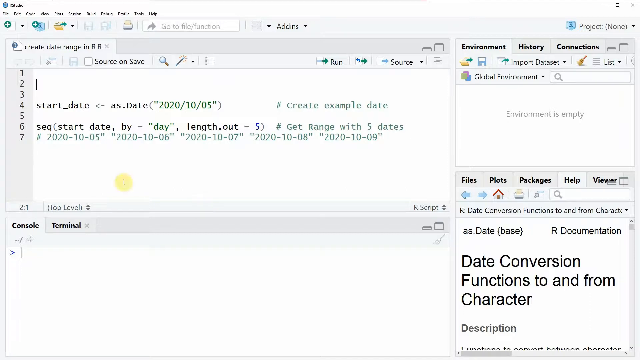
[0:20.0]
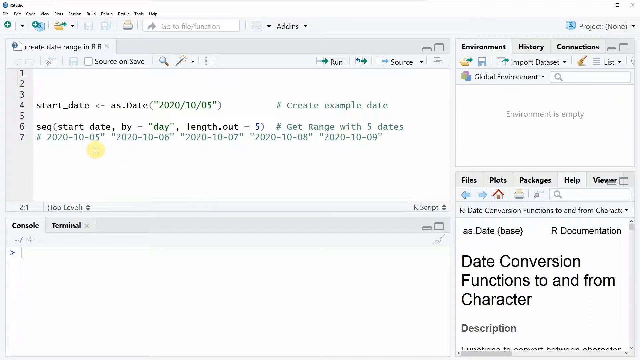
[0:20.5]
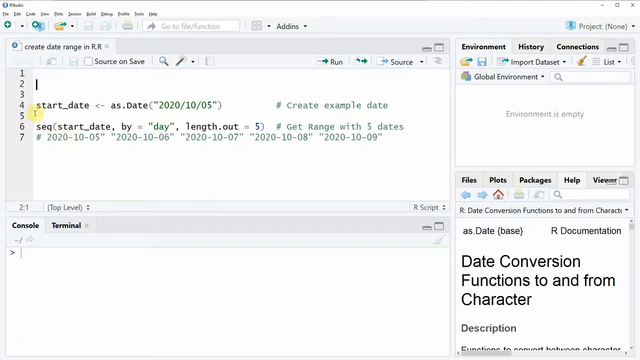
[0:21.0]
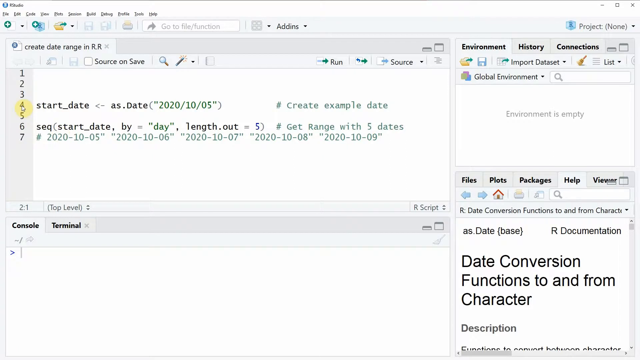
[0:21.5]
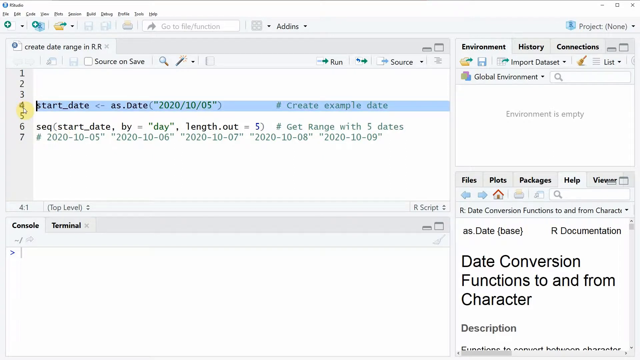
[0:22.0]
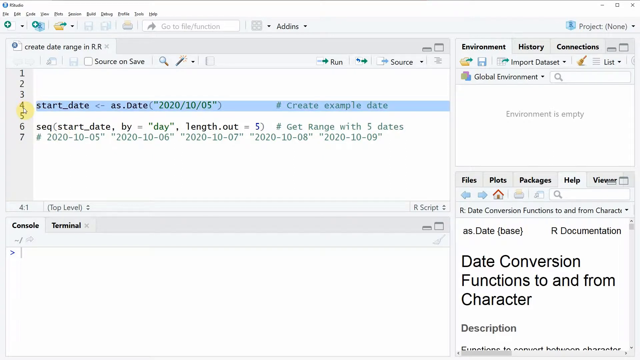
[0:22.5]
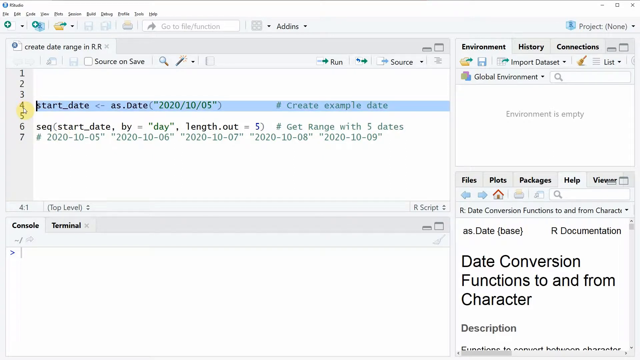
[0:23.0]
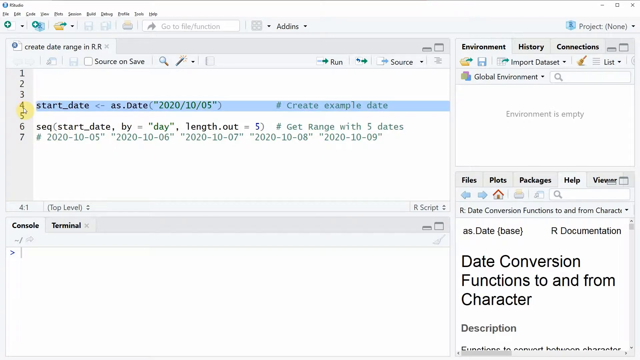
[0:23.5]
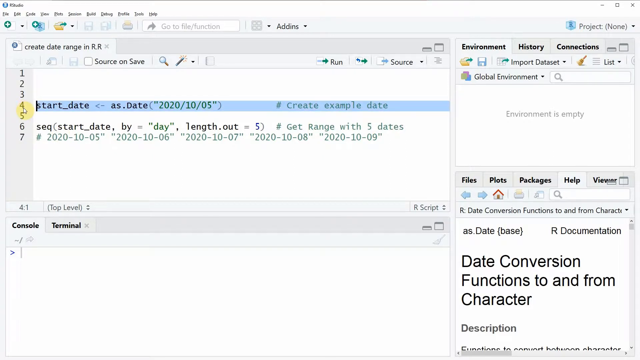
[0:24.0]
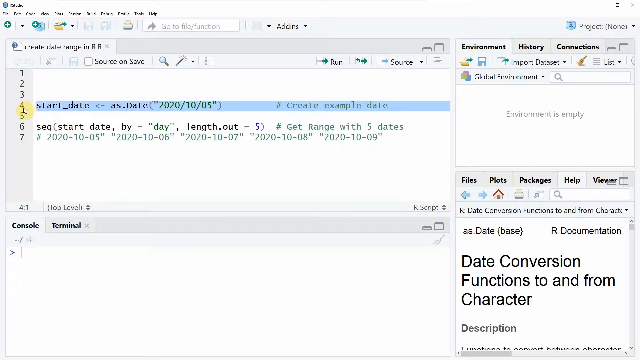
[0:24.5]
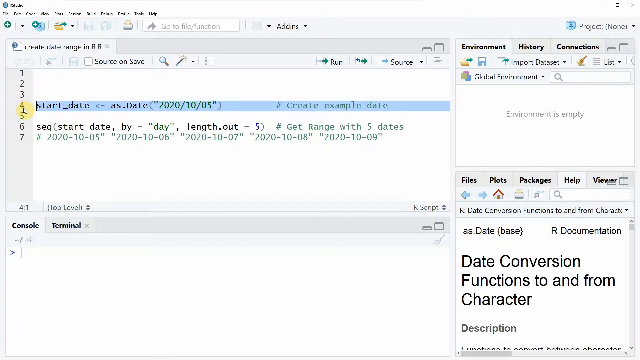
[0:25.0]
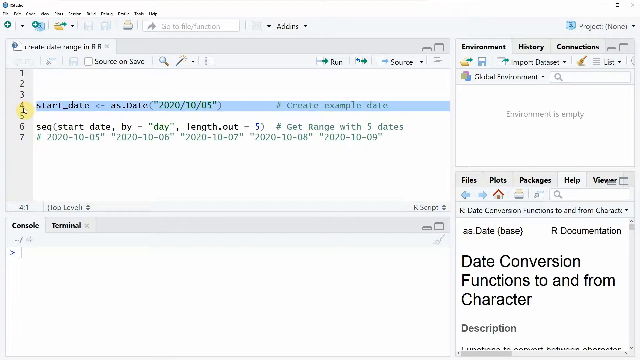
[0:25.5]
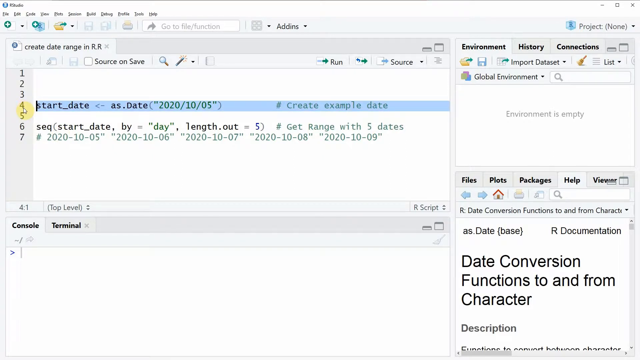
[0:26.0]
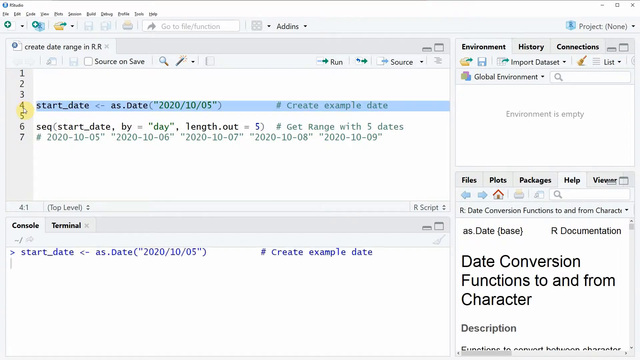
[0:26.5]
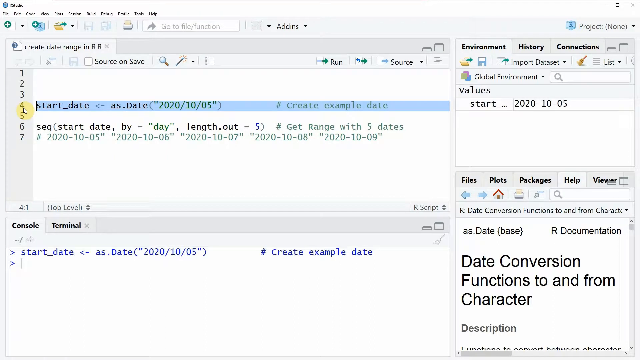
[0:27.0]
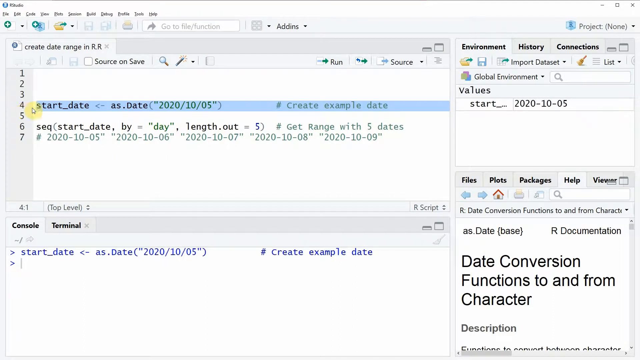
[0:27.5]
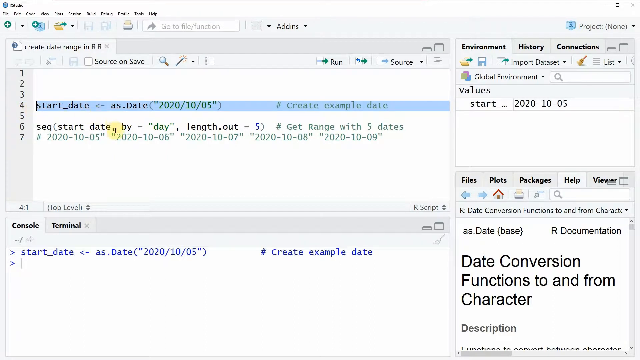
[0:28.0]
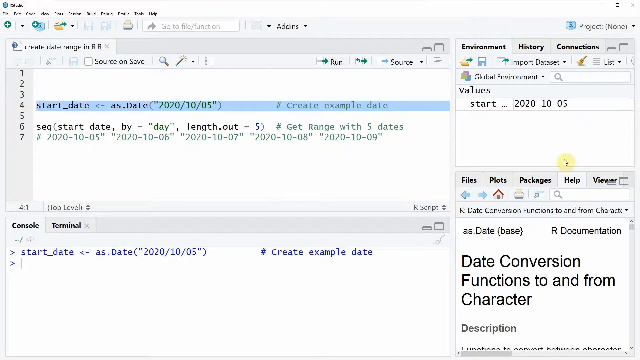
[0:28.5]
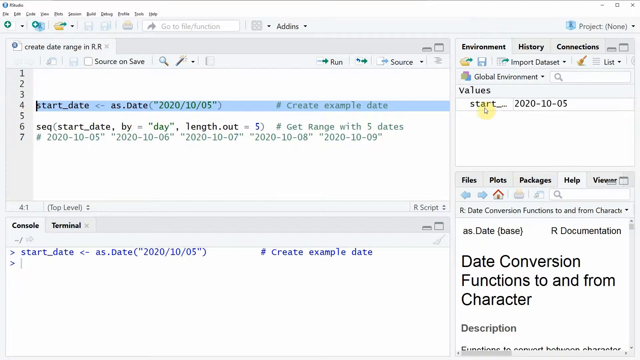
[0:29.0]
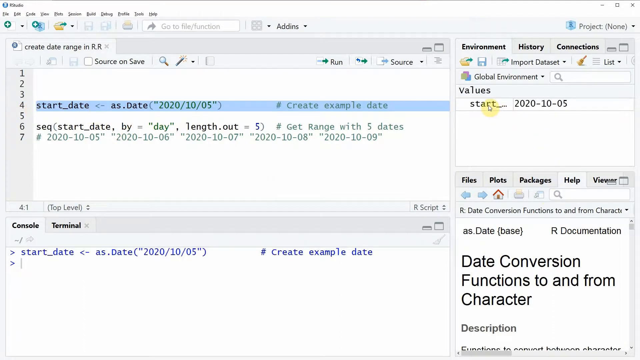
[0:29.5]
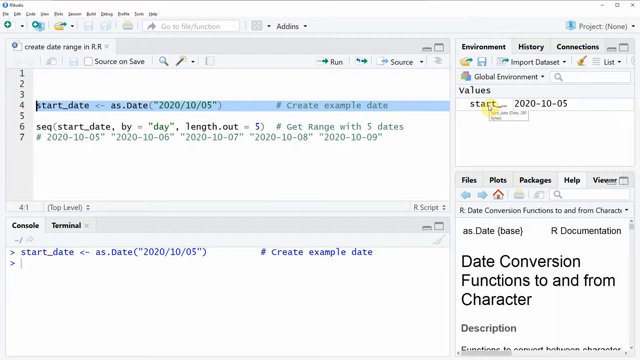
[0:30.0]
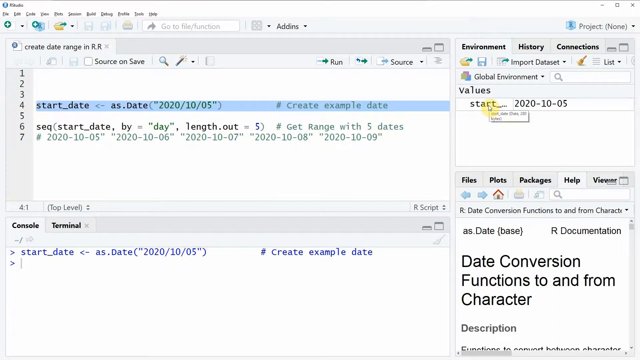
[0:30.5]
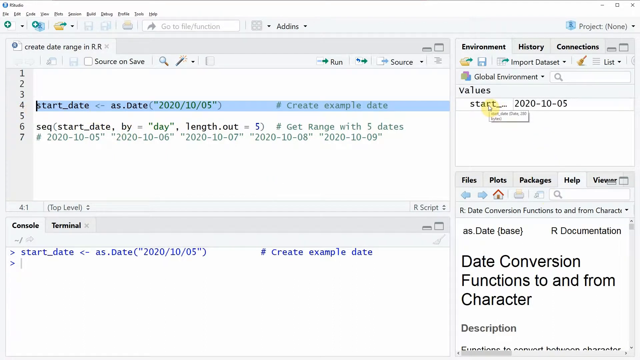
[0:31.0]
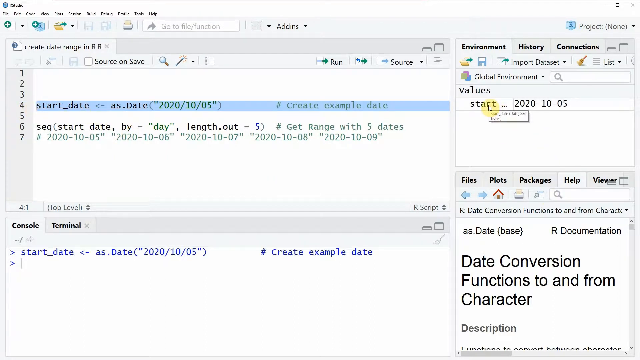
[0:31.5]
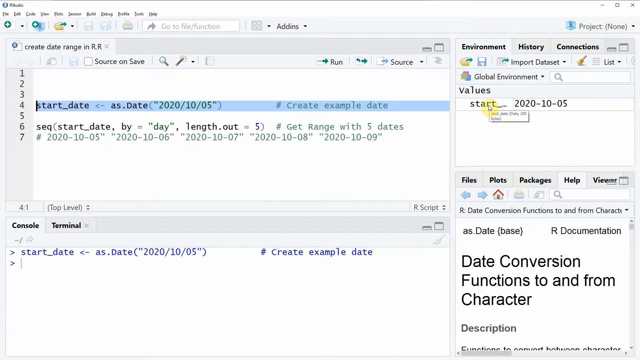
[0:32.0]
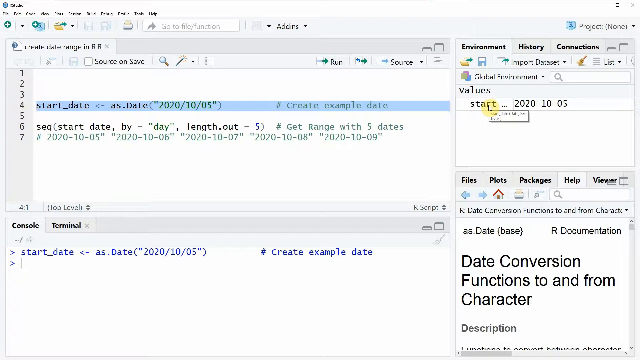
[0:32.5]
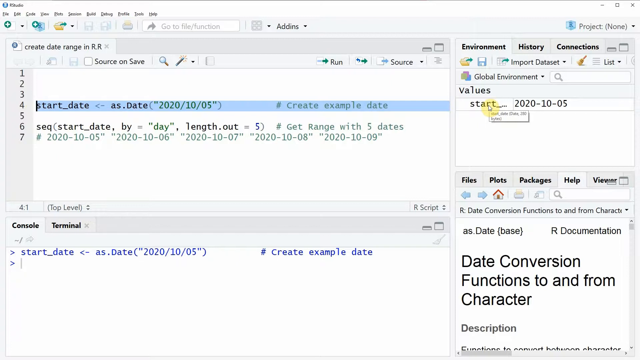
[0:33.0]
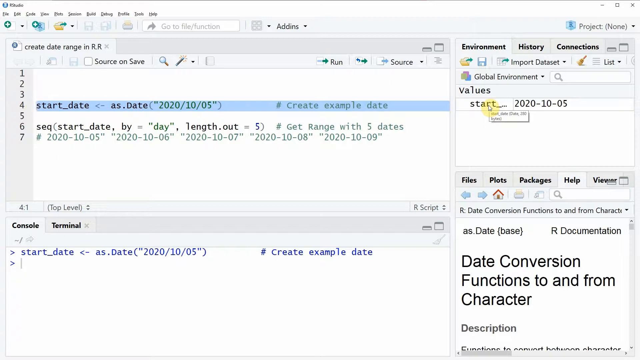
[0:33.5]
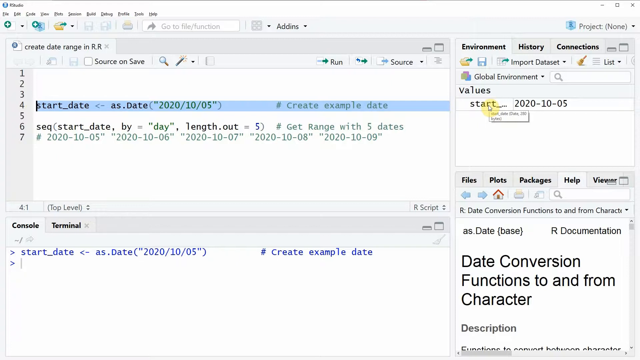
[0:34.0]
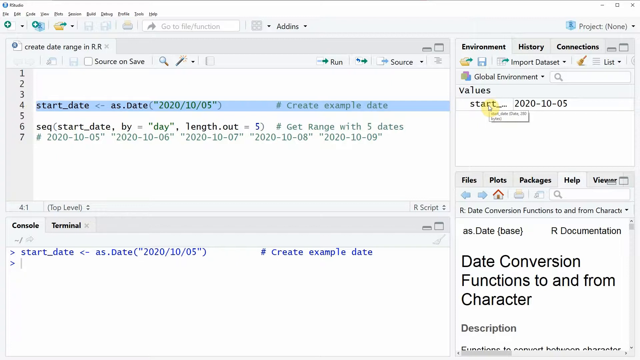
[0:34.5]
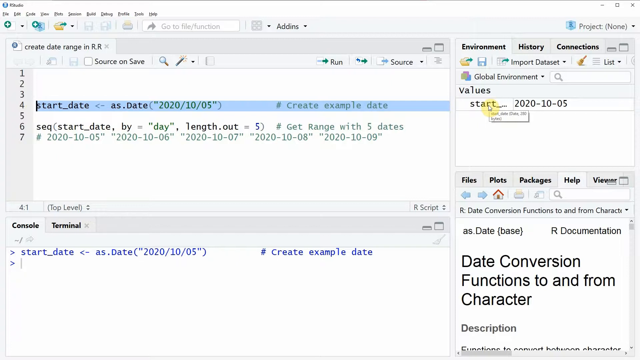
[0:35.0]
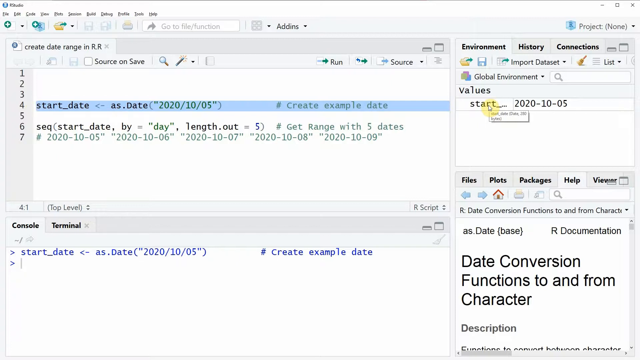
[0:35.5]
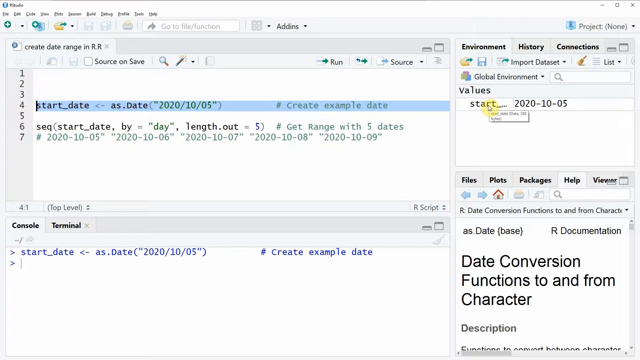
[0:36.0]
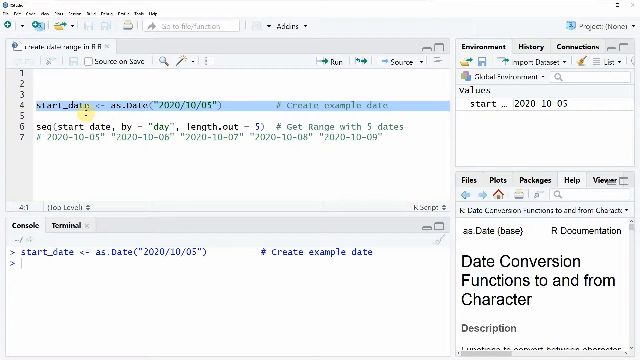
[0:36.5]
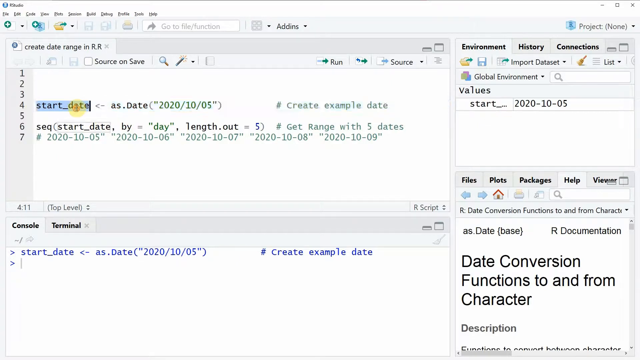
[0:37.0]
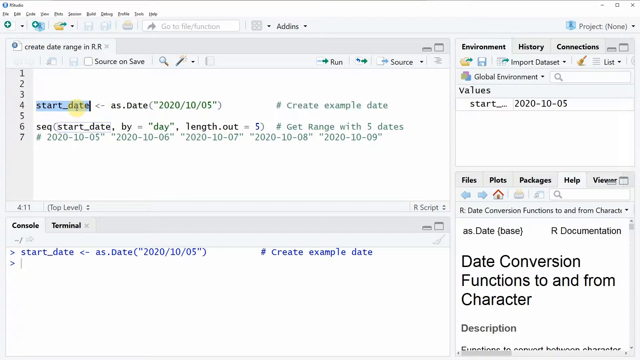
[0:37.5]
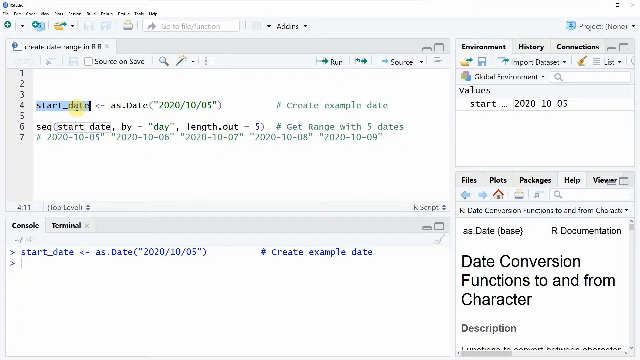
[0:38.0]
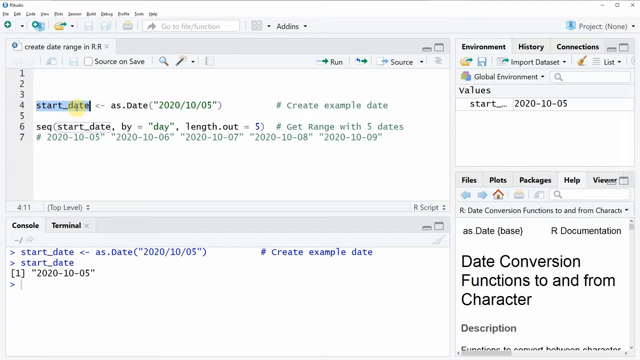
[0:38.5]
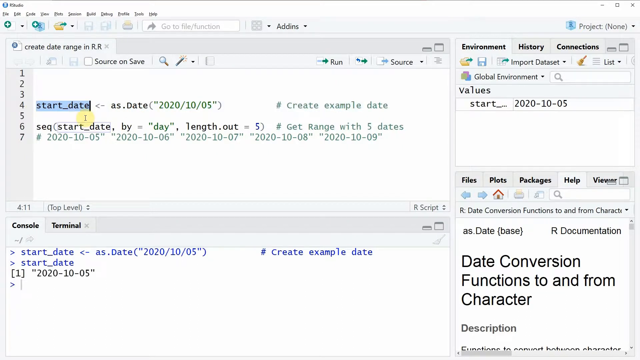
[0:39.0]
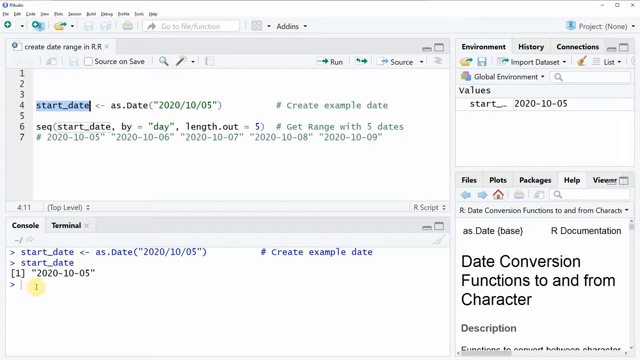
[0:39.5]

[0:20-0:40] On the left-hand side of the screen are sections of code with open and closed parentheses. The lines contain numbers and dates, with start dates and end dates shown on different rows.